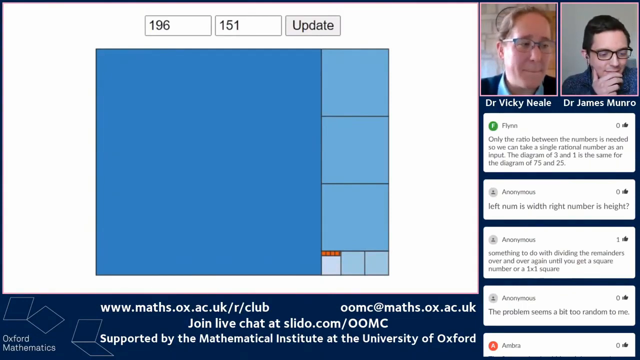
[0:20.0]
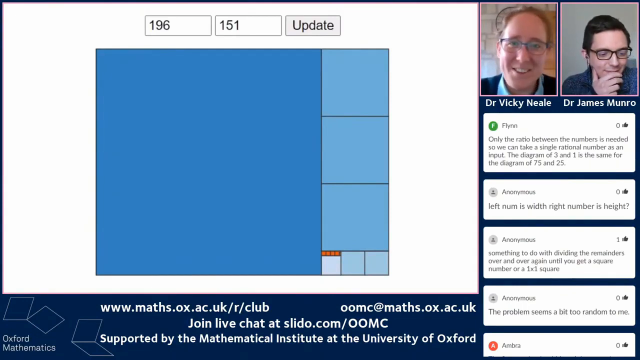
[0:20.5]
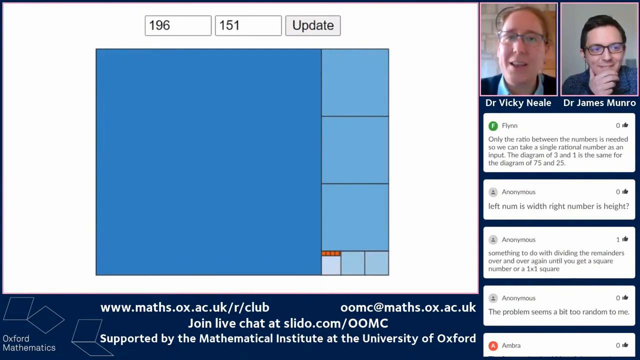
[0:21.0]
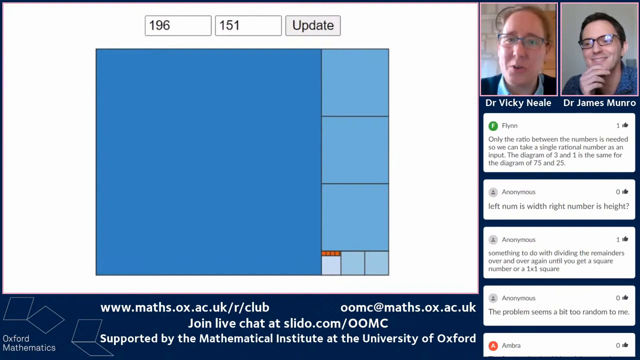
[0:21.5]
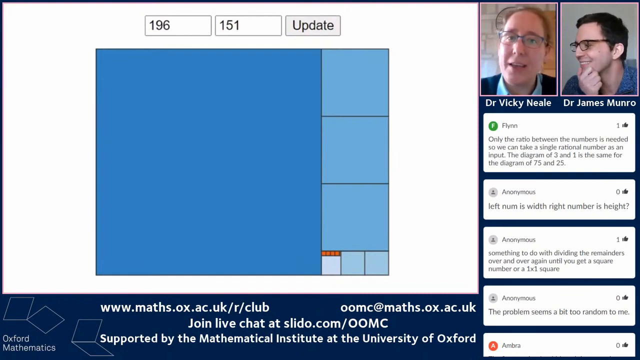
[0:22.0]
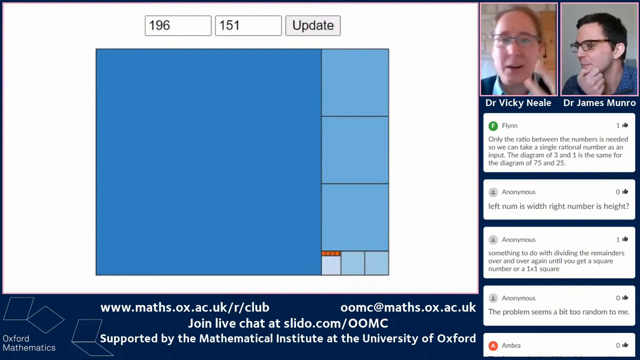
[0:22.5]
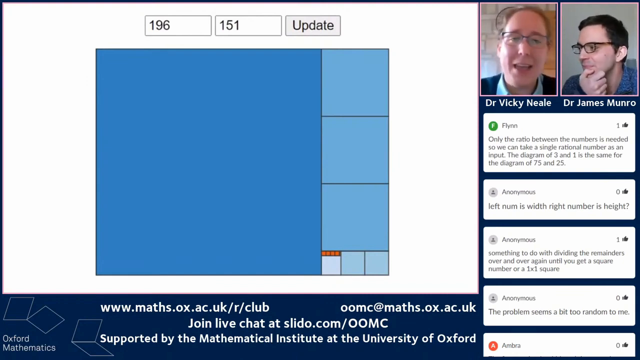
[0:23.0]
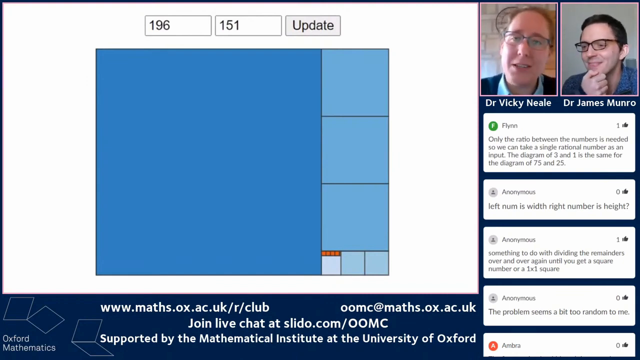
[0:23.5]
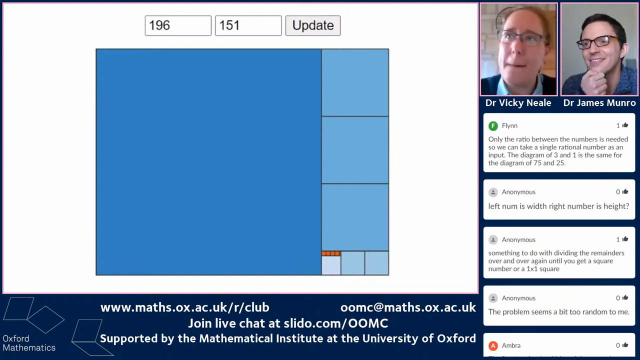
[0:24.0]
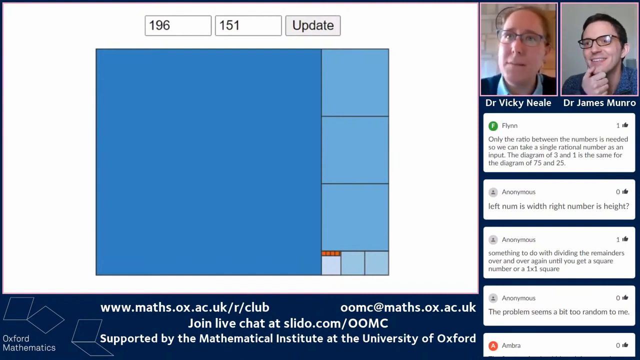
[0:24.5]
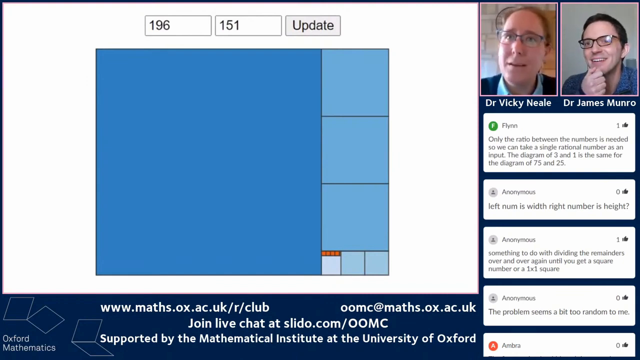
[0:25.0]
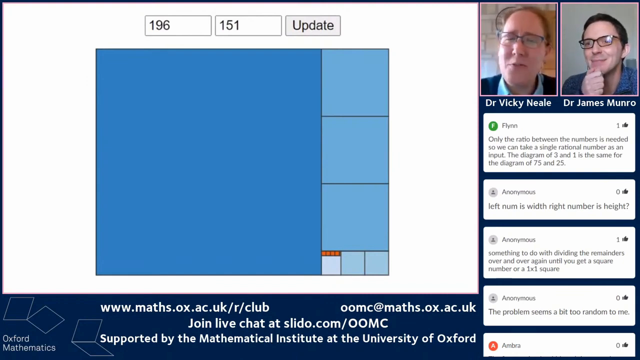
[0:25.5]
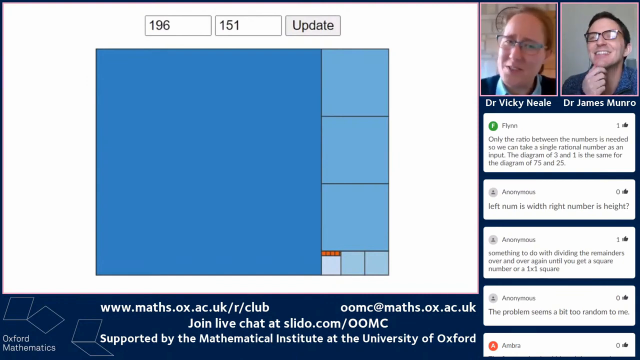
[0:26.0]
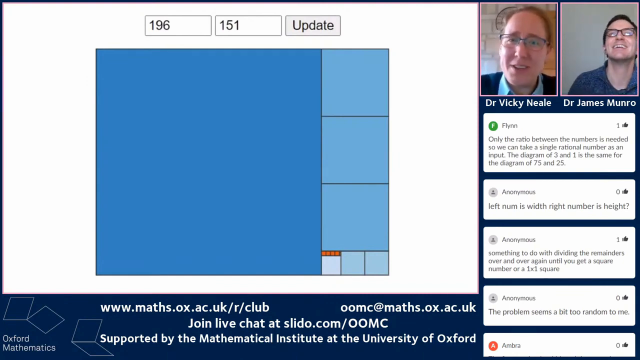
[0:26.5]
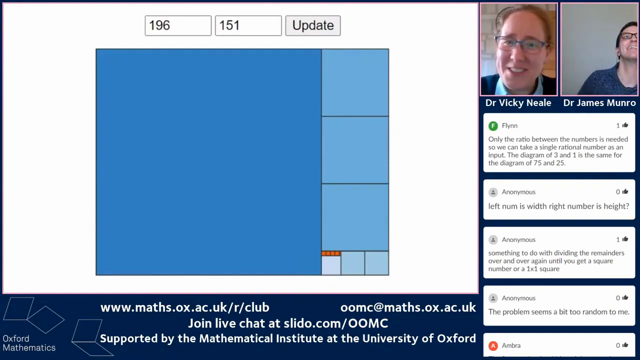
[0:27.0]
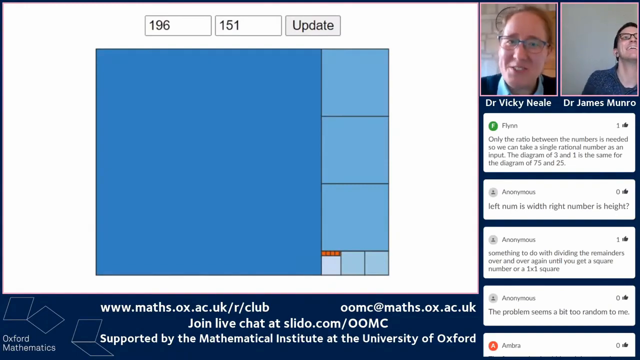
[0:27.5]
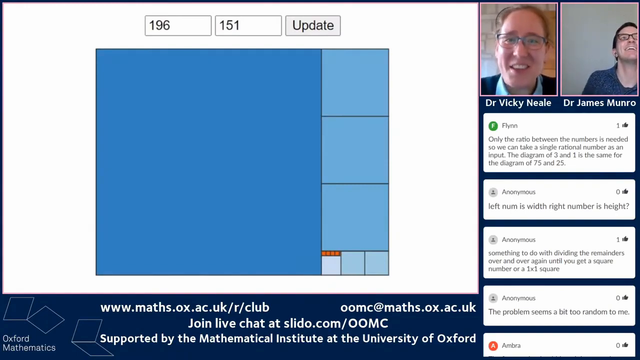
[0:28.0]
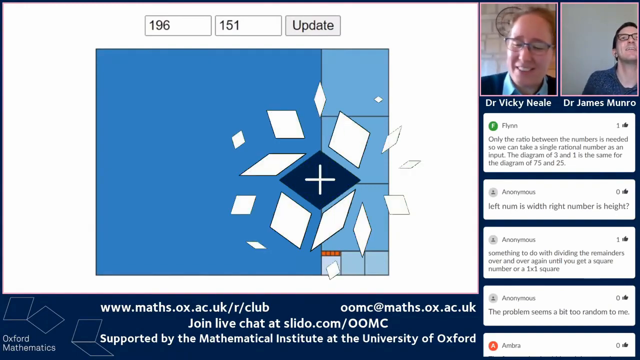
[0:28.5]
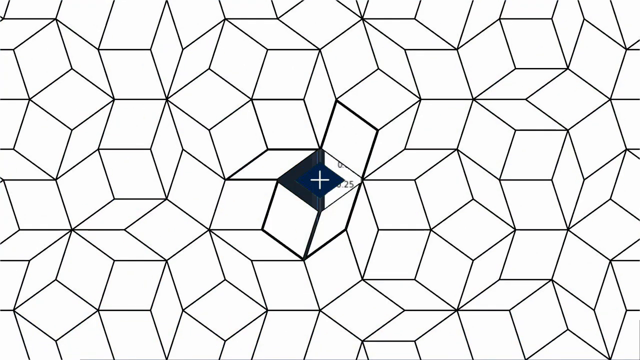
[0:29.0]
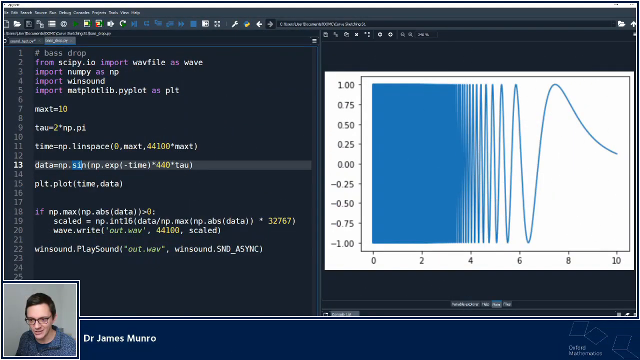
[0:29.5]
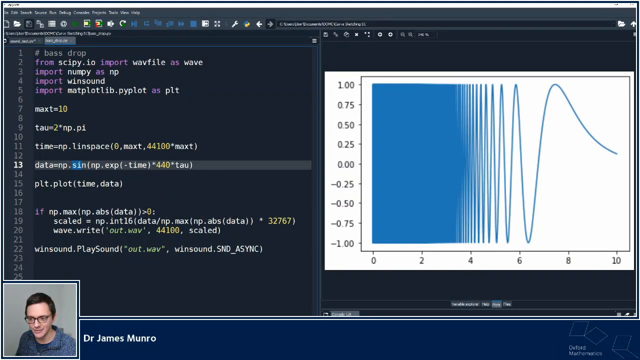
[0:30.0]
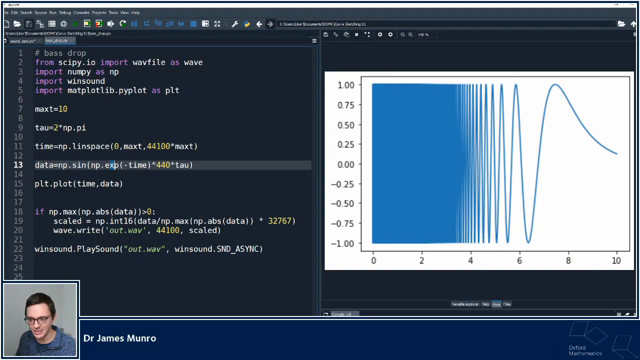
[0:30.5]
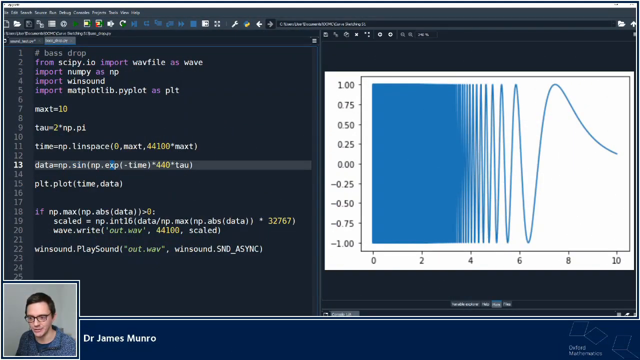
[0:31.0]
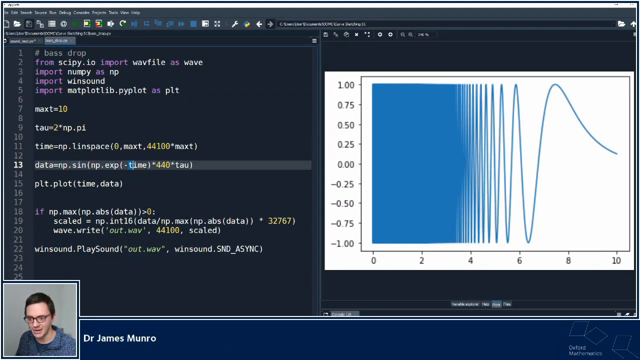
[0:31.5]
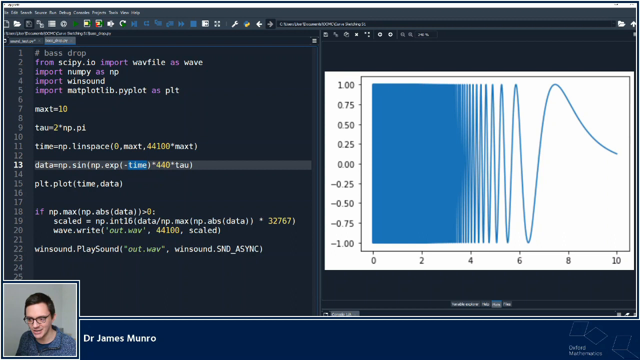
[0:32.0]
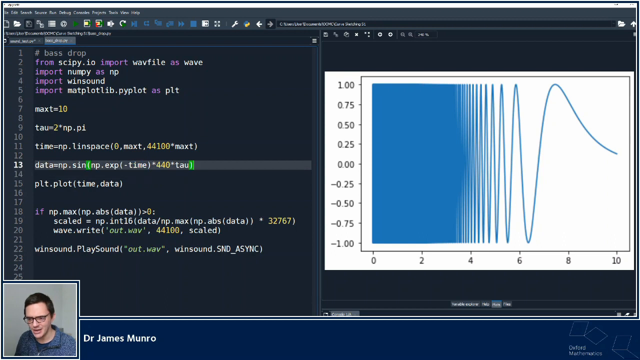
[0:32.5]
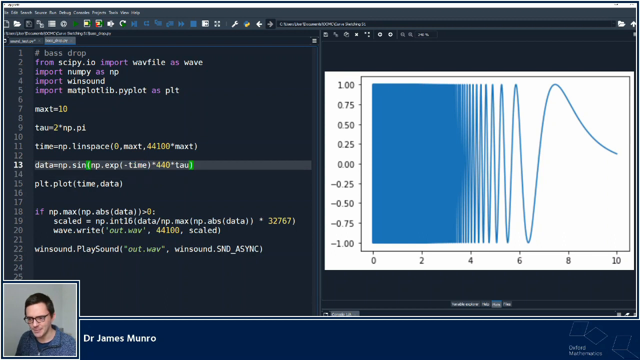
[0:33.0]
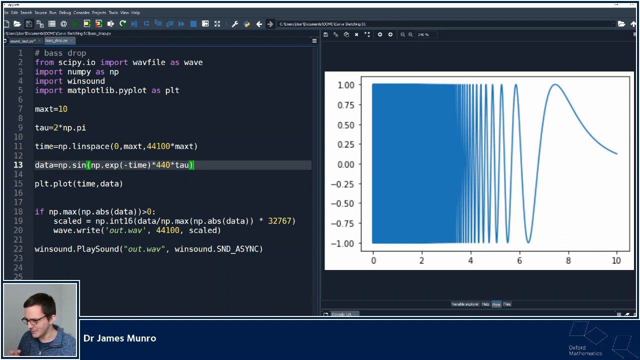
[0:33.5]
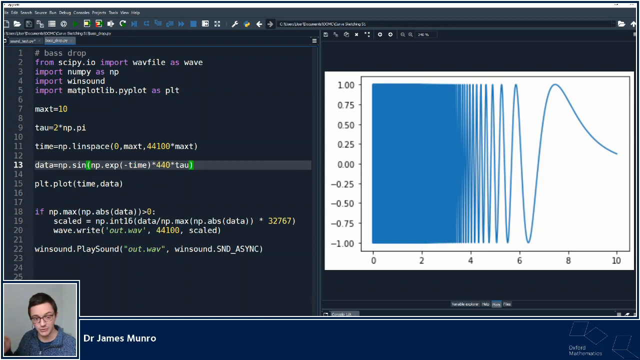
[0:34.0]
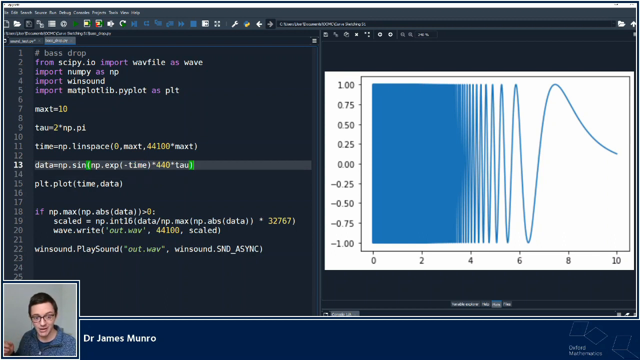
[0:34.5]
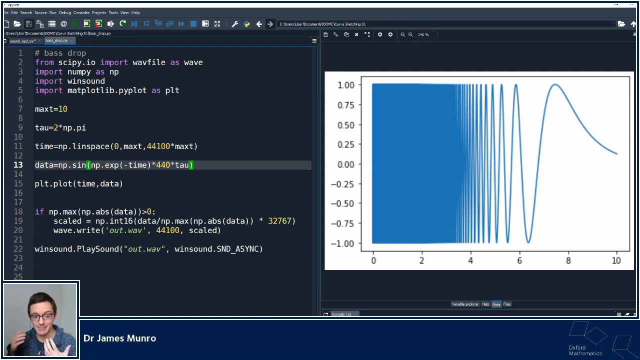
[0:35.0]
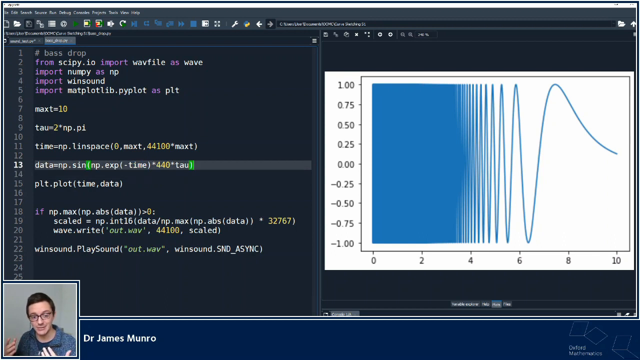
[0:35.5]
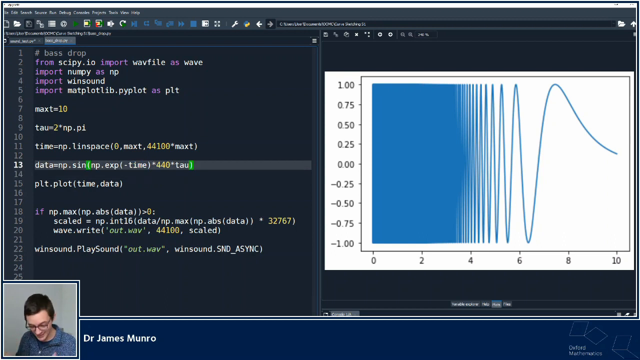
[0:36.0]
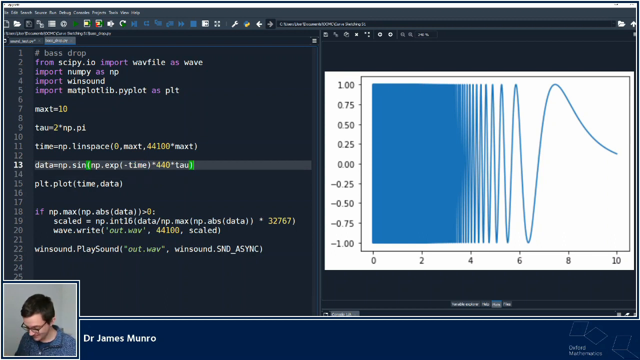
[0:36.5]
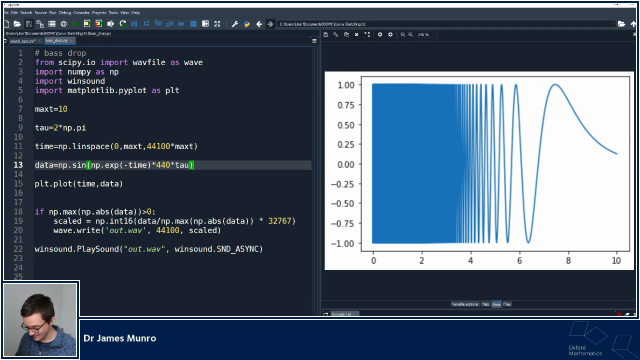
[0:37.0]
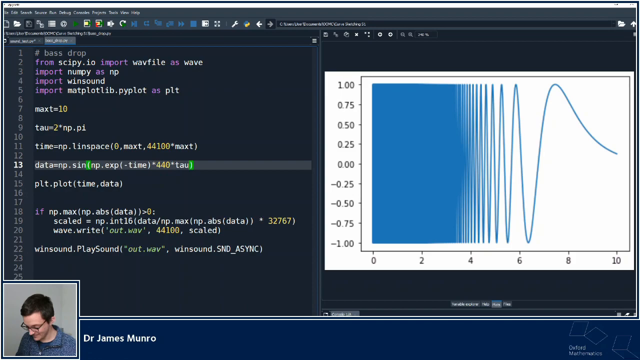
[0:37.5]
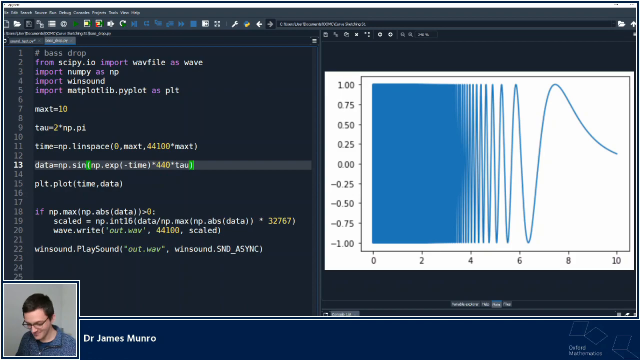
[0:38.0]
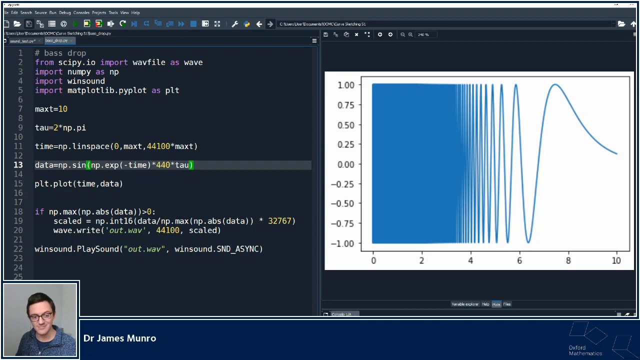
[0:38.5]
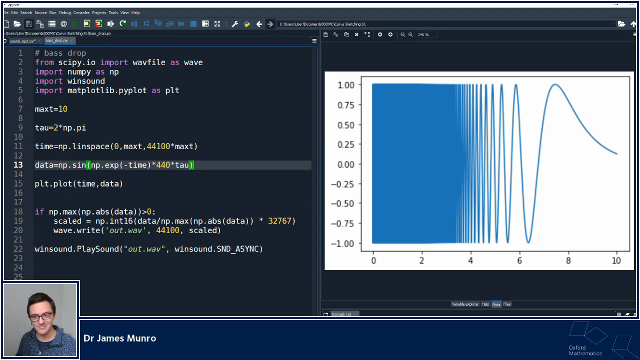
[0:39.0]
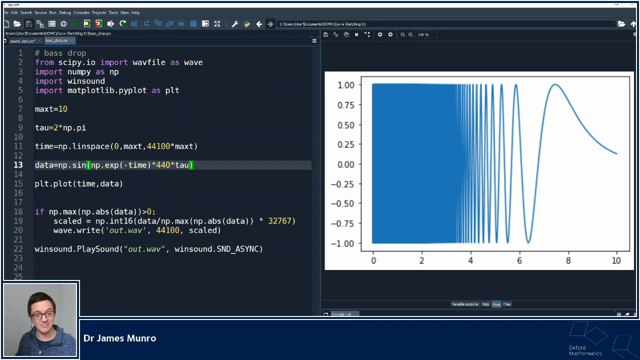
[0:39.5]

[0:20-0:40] Dr. Fikina and Dr. James Morrow continue in a video chat, and their conversation is turned into writing below their video pictures. The page is laid out with the names Dr. Fikina and Dr. James Morrow written on it. They are chatting on the Oxford online maths club, a group for the Mathematical Institute and the University of Oxford, with their speech shown as text messages below. A chart describing the bass drop is also shown.